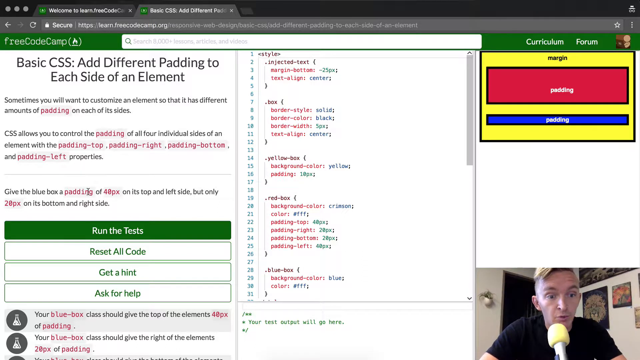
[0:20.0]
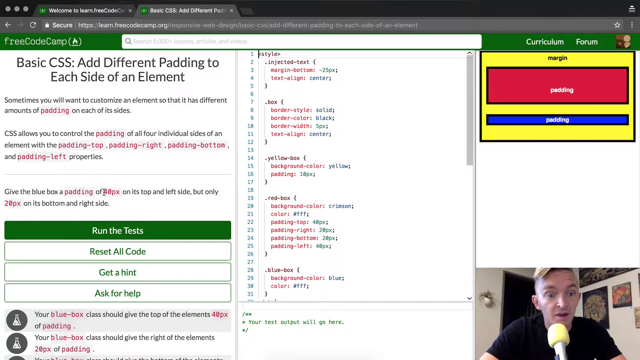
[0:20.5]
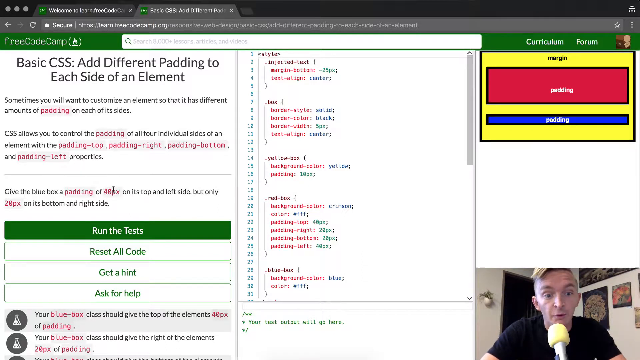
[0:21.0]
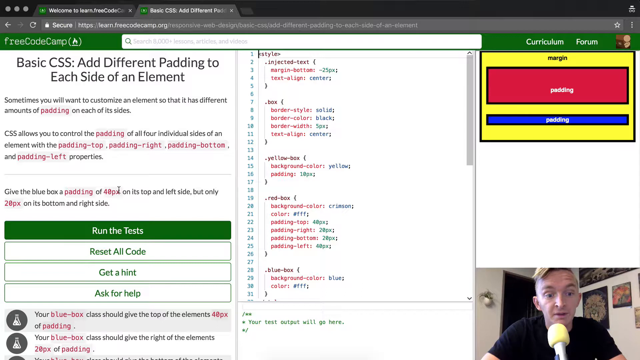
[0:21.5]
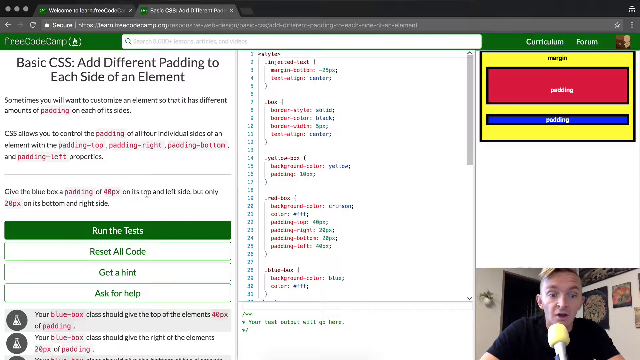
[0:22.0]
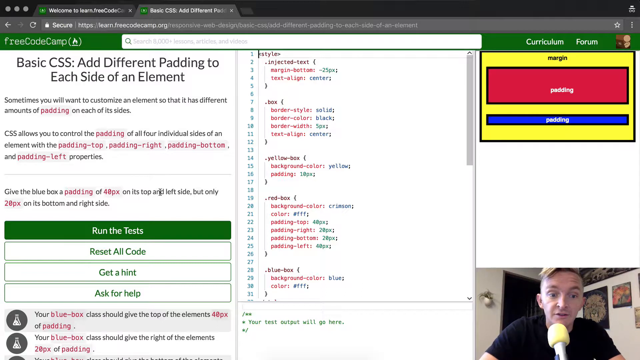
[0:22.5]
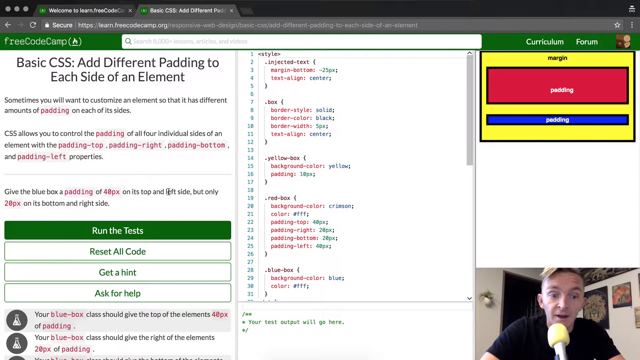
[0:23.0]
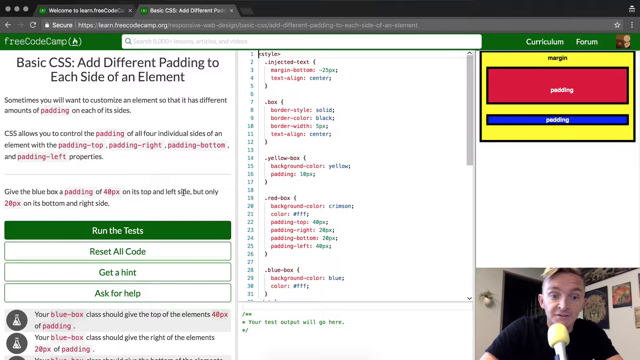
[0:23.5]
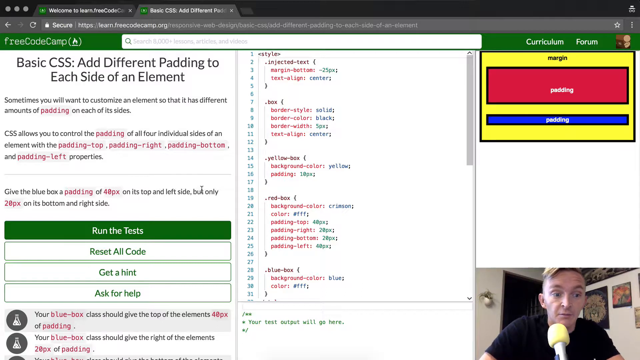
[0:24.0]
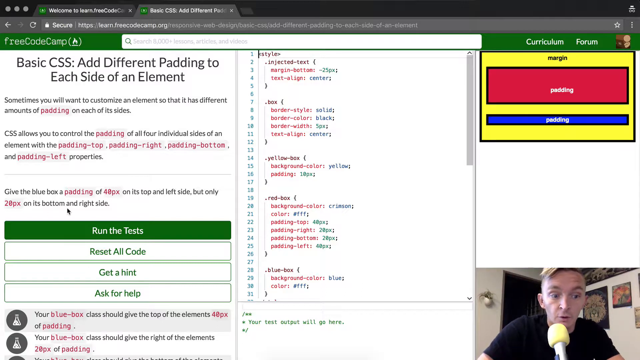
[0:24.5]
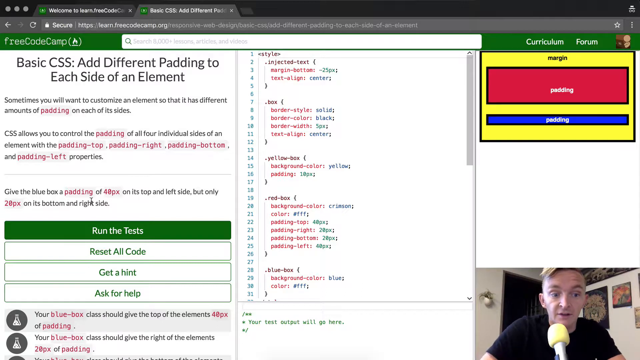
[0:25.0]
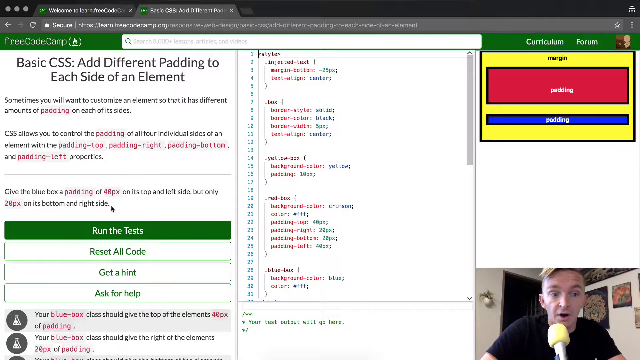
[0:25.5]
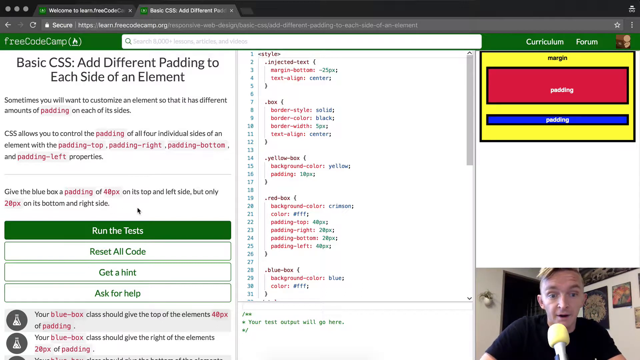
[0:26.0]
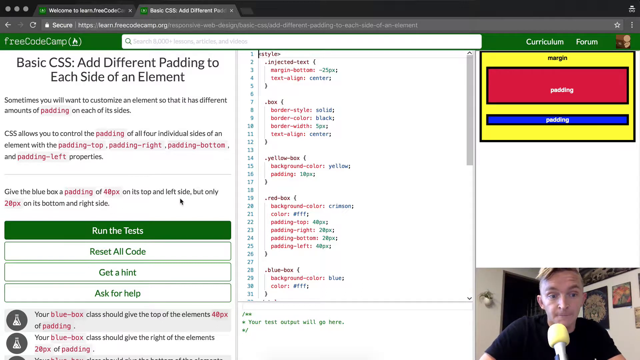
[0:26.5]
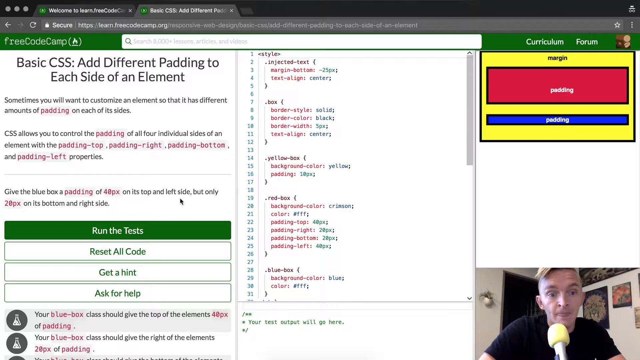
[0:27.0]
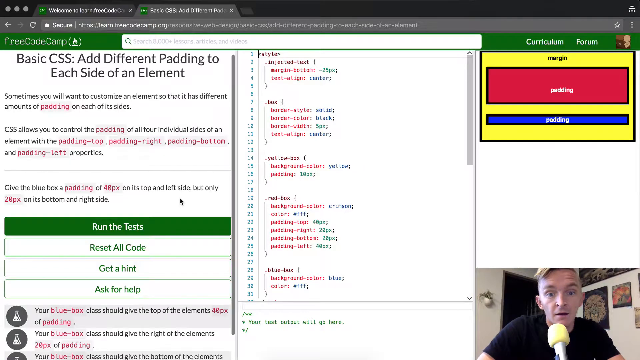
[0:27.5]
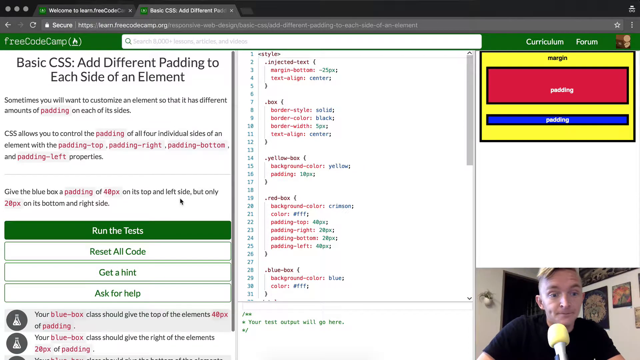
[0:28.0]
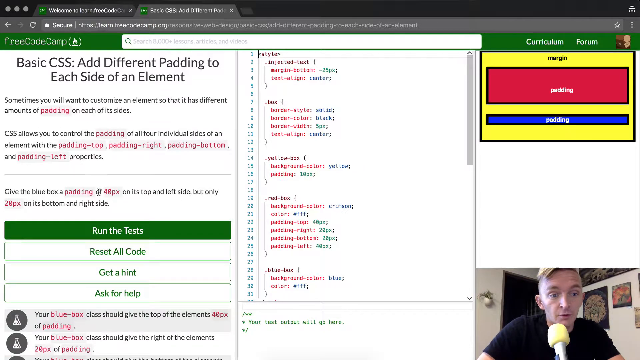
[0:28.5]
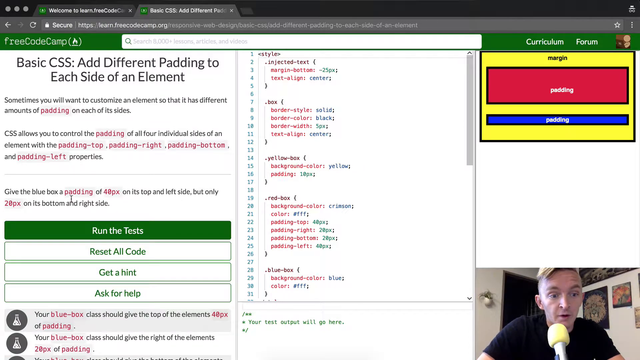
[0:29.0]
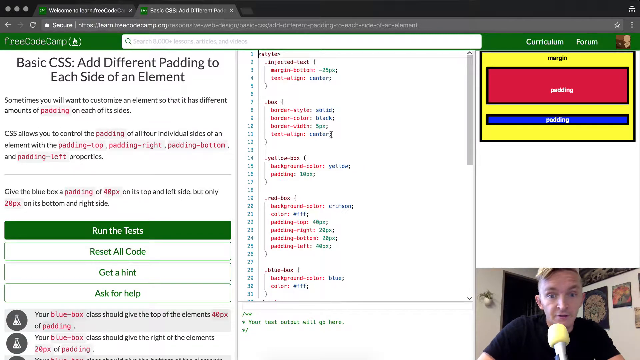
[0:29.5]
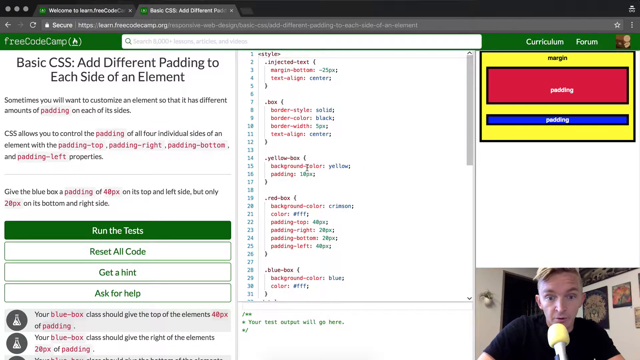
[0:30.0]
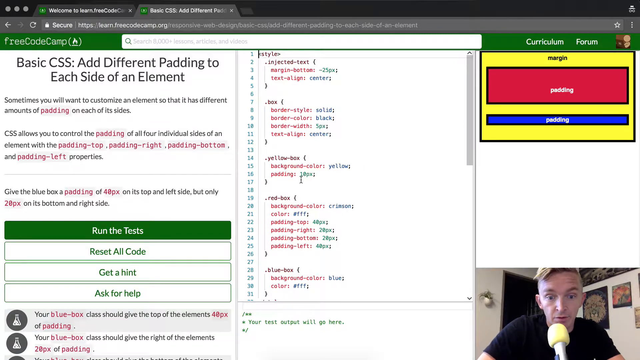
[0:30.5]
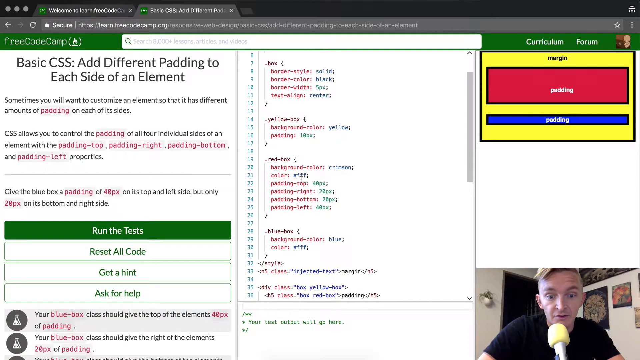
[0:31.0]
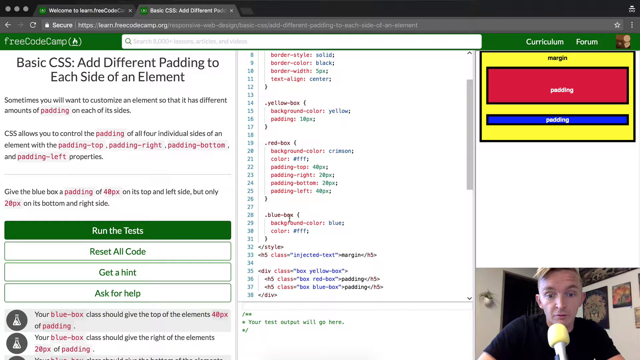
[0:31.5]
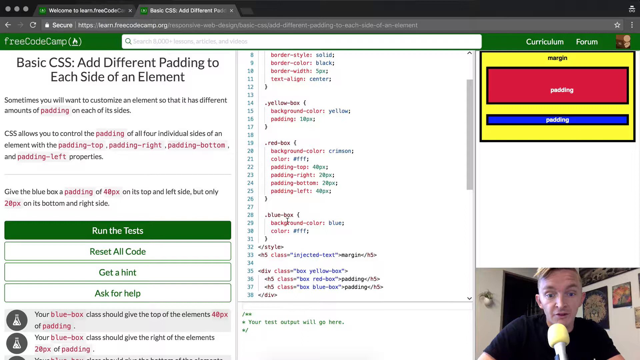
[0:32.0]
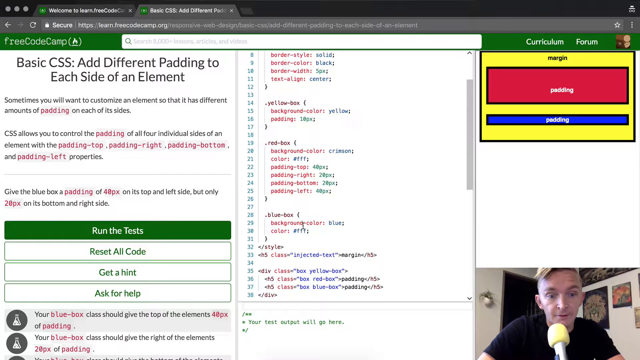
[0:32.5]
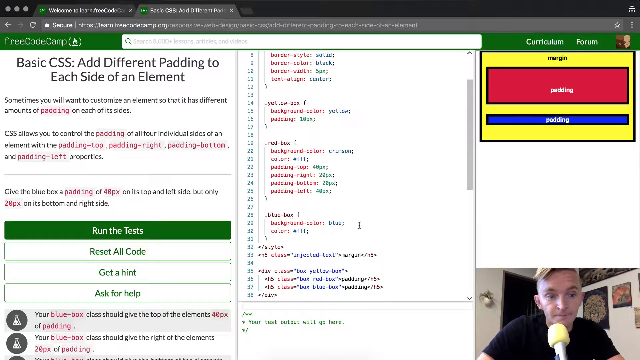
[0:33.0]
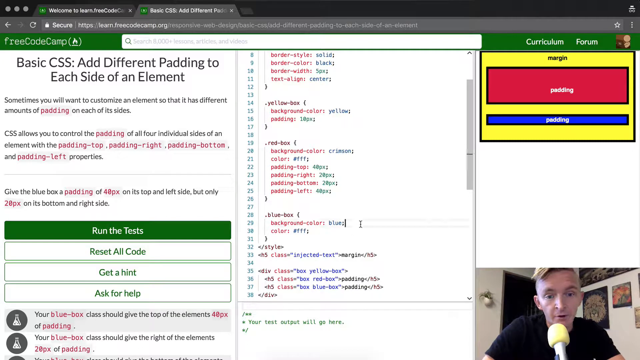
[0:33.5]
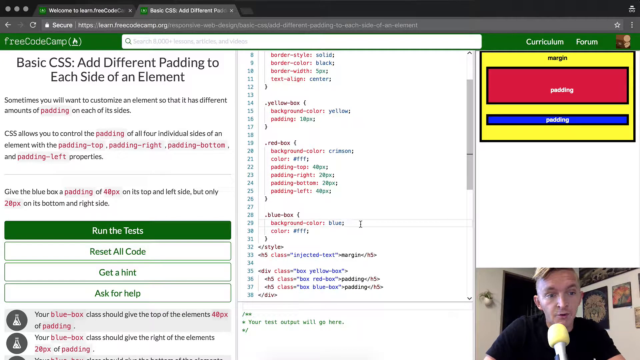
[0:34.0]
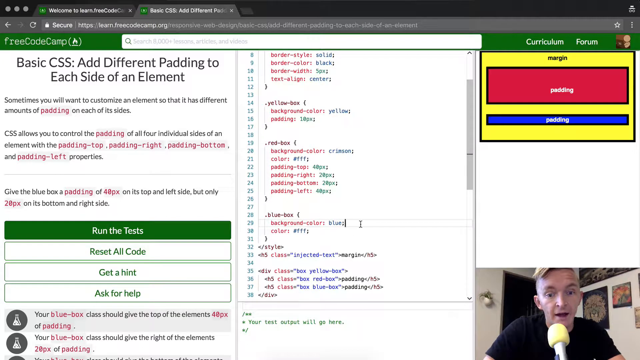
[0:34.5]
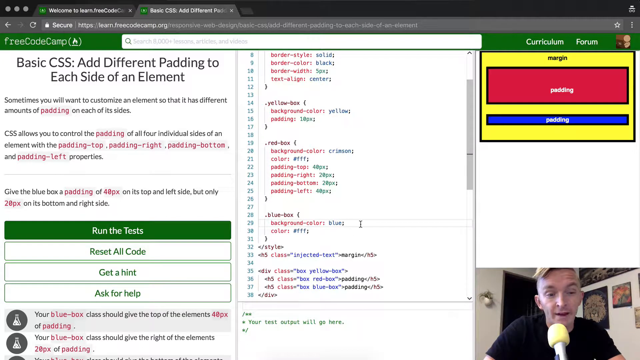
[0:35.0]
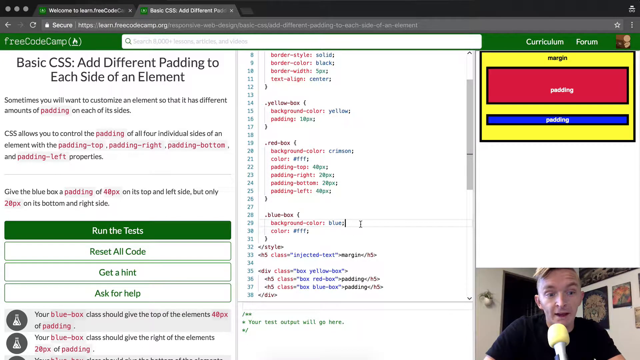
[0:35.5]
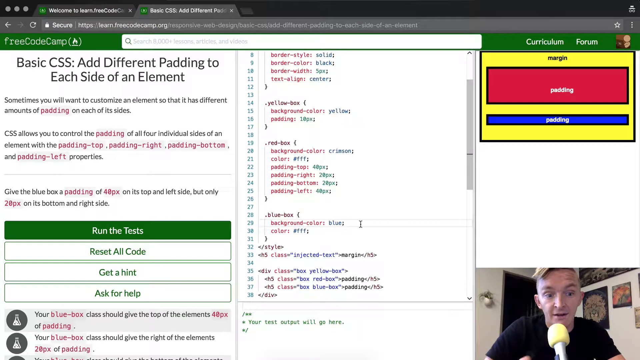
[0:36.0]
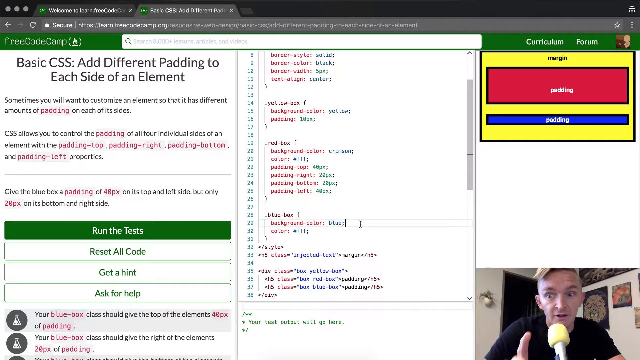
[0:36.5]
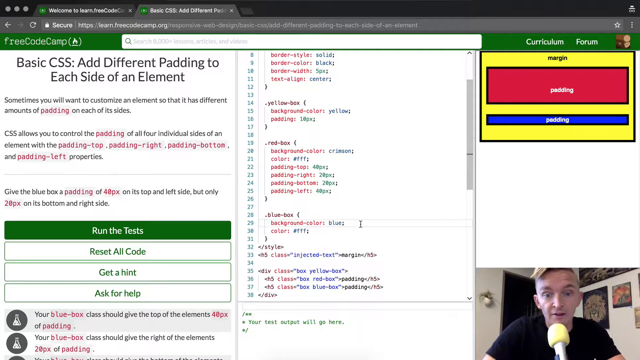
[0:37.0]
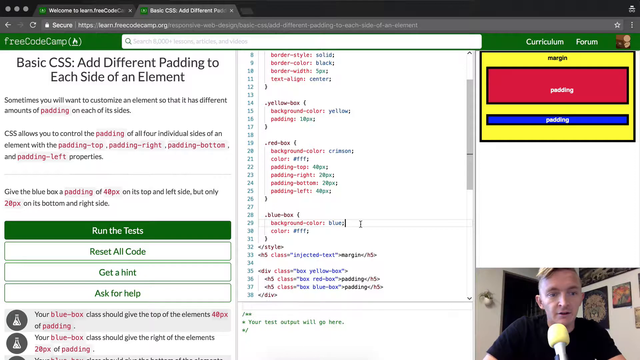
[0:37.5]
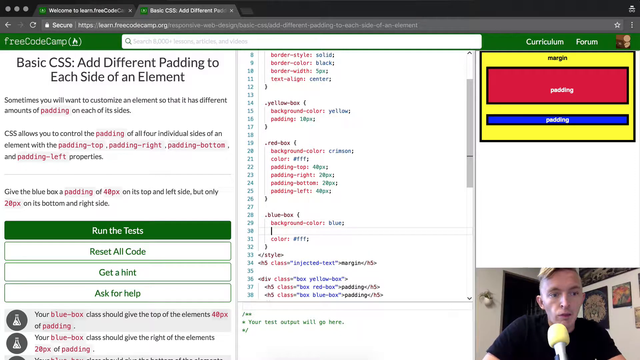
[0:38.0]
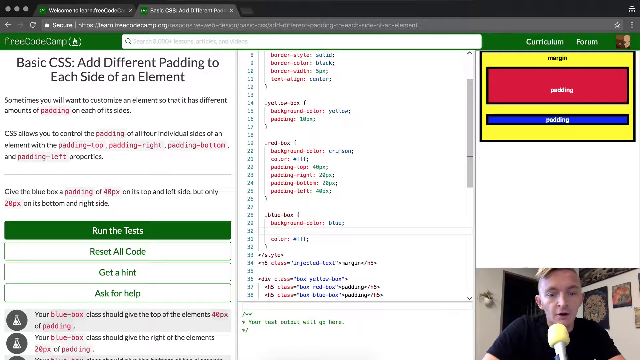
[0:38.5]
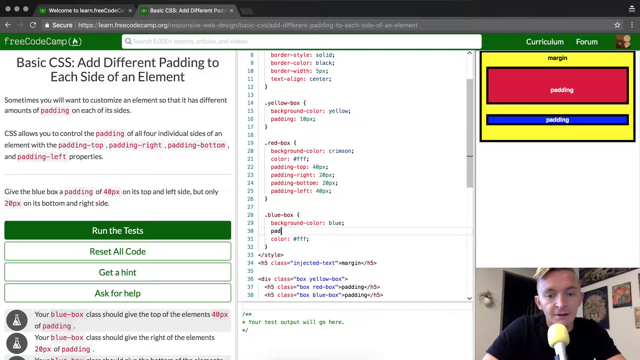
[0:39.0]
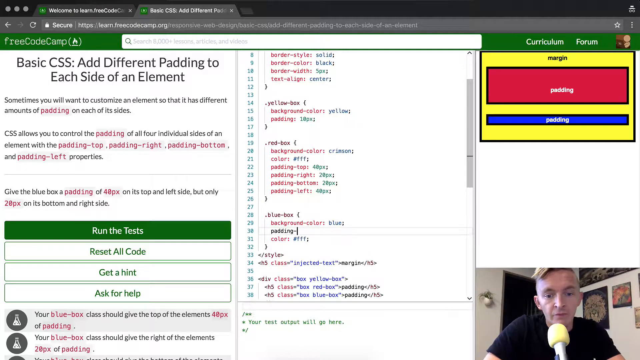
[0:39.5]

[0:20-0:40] The instructions are still shown with the coding panel in the center. The instructor moves his cursor along a new section of instructions right above the run test portion. He then turns to the code section, clicks right next to a piece of code, presses enter, and types. He tilts his head a little but does not move his hands much. He then scrolls down in the code and enters a new line. In the top right of the page there is a yellow box that says "margin"; within it is a red rectangle that apparently says "padding," and below that is a long, thin blue rectangle that also says "padding." At the very top right is a green menu bar with the options "curriculum" and "forum" in white text.